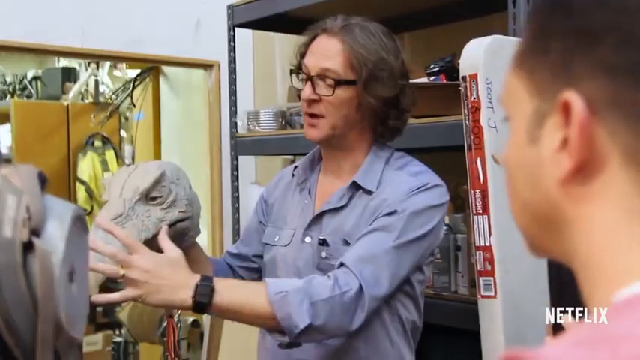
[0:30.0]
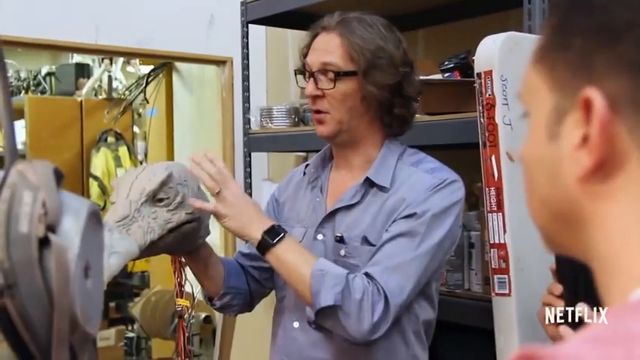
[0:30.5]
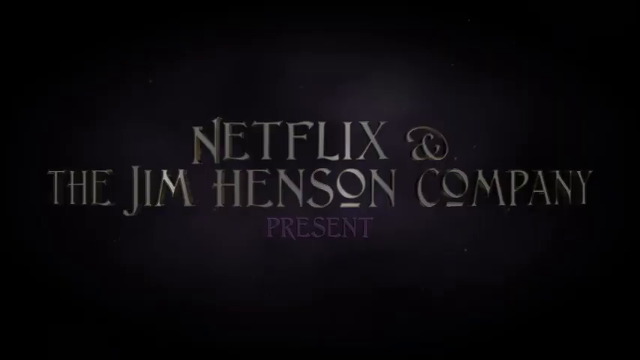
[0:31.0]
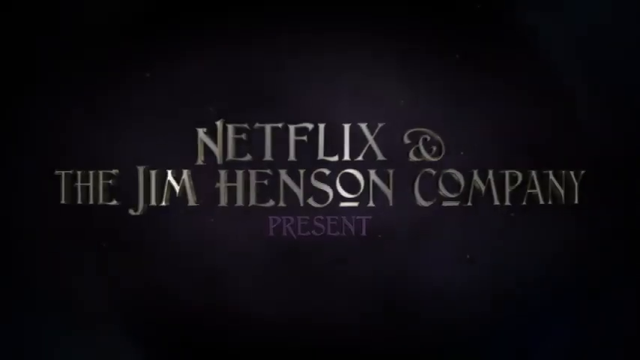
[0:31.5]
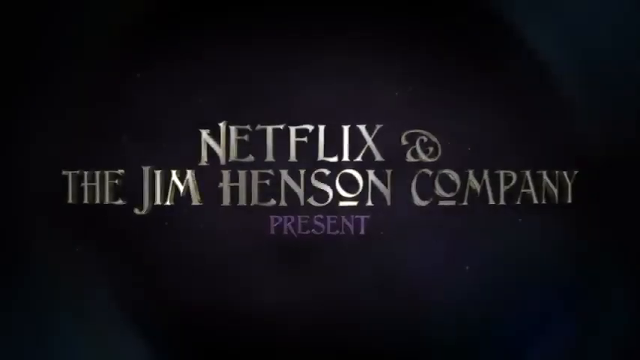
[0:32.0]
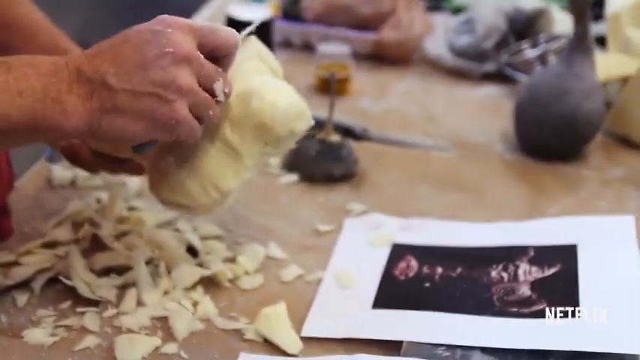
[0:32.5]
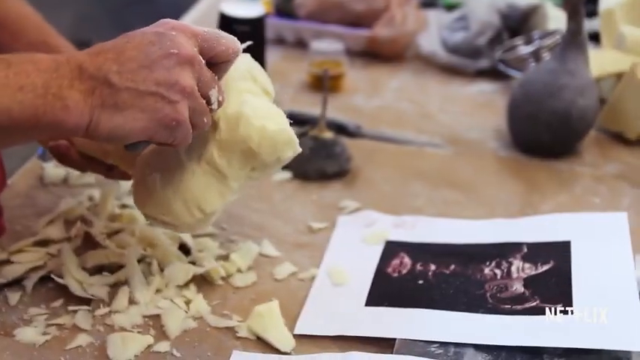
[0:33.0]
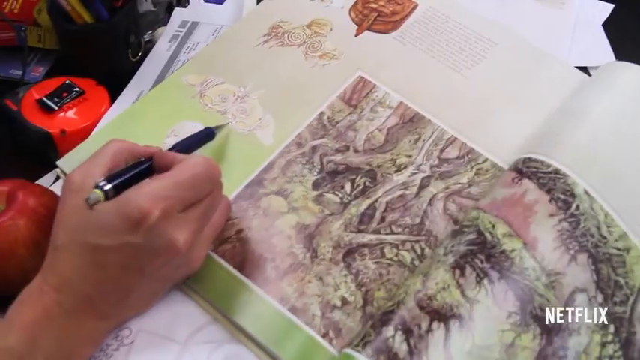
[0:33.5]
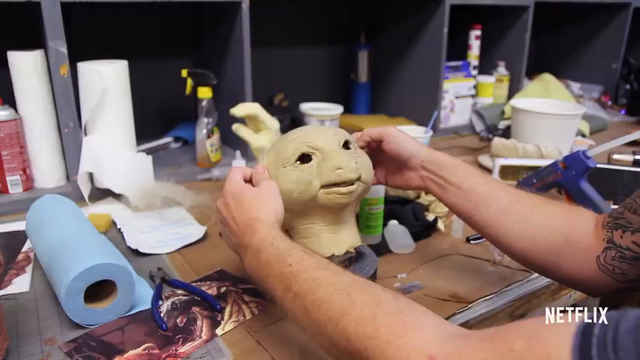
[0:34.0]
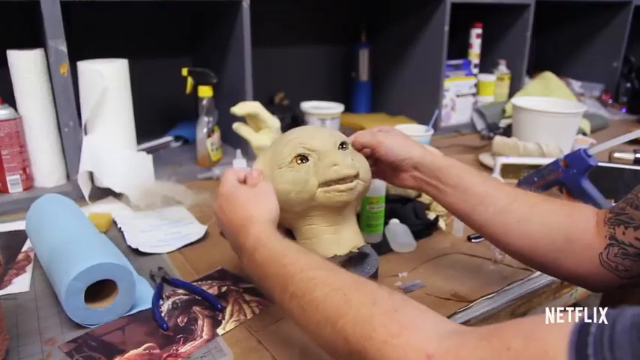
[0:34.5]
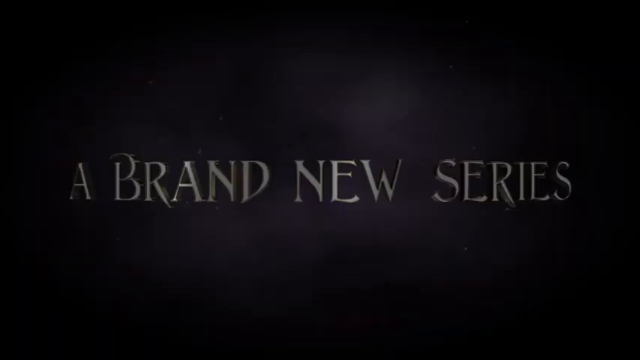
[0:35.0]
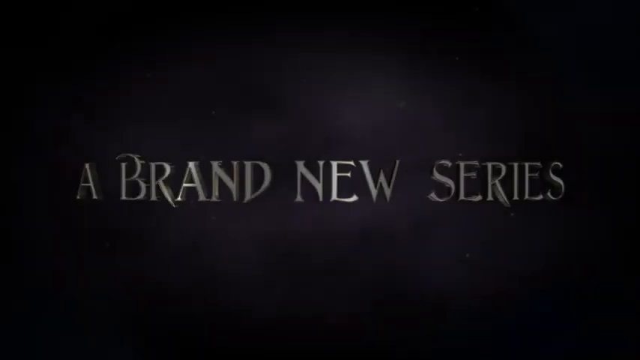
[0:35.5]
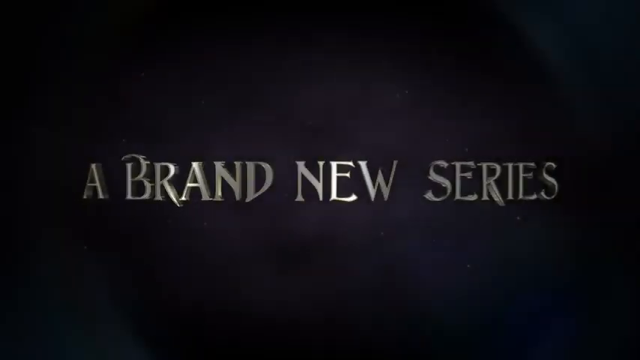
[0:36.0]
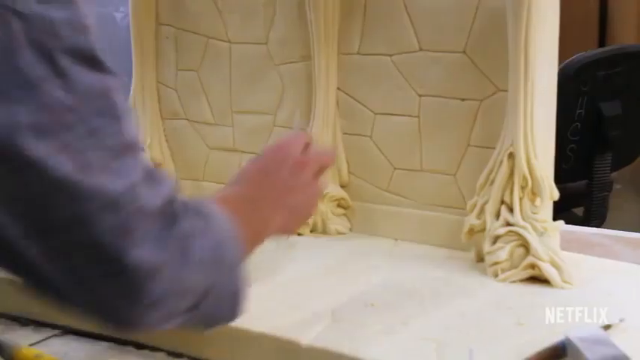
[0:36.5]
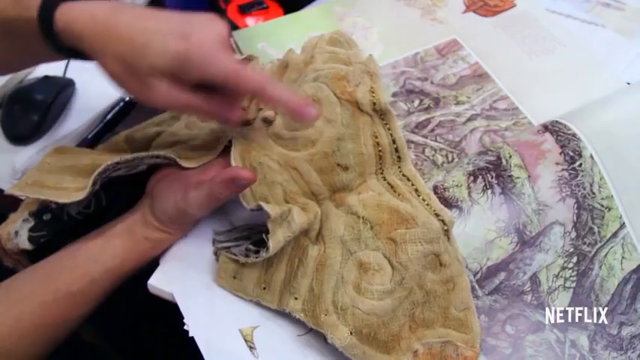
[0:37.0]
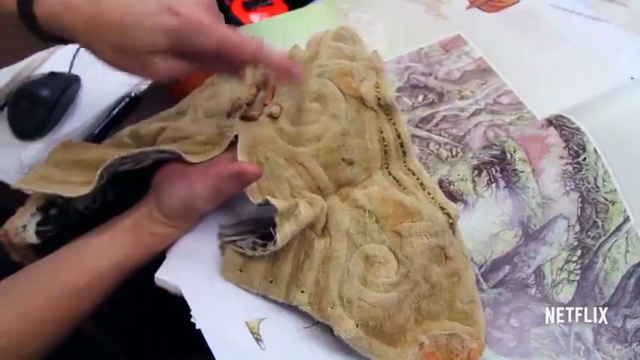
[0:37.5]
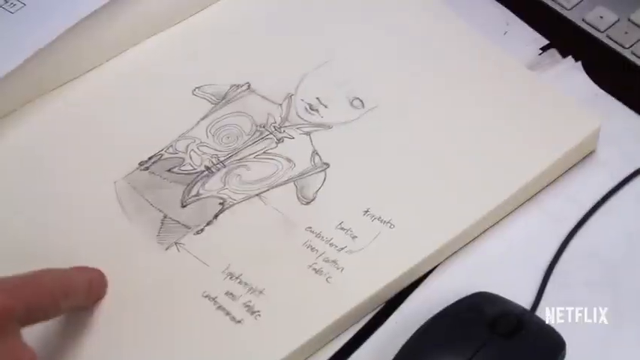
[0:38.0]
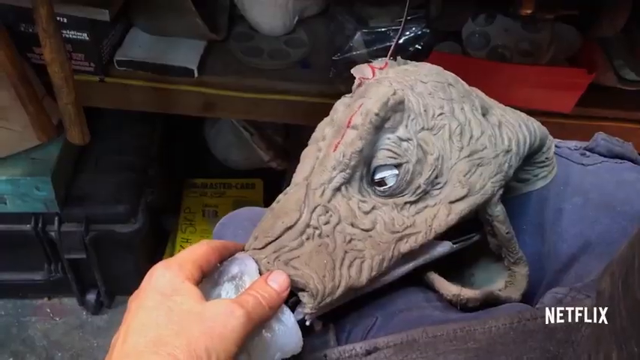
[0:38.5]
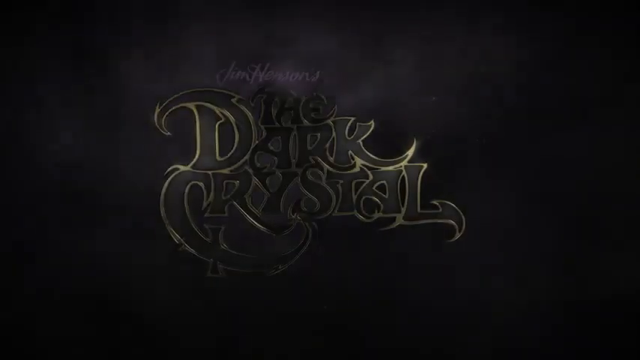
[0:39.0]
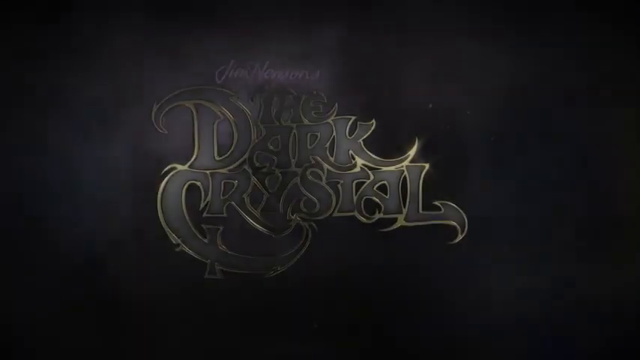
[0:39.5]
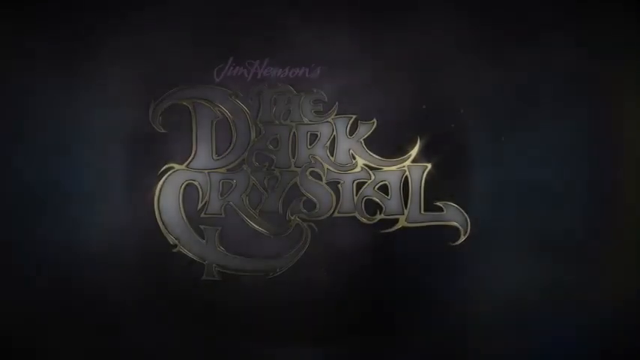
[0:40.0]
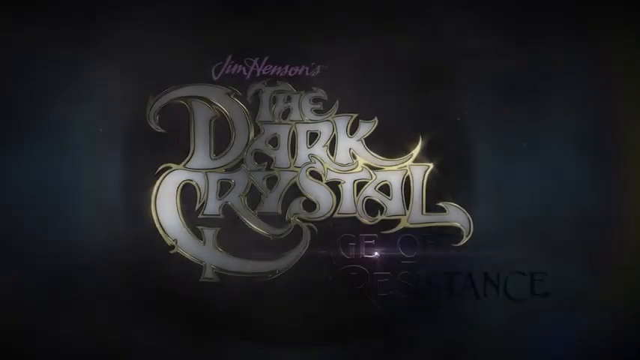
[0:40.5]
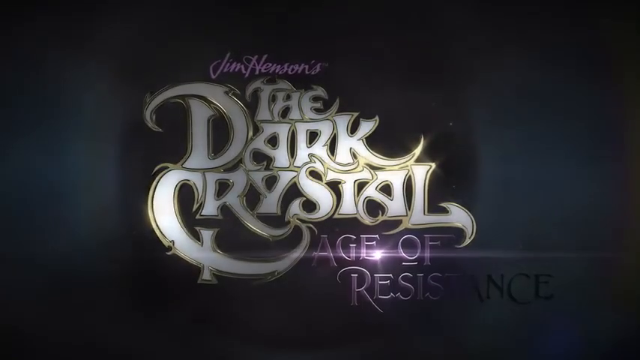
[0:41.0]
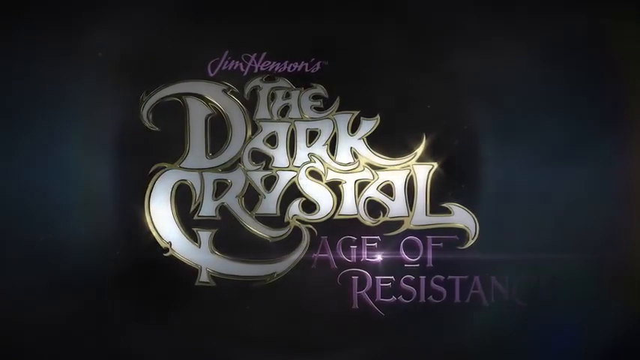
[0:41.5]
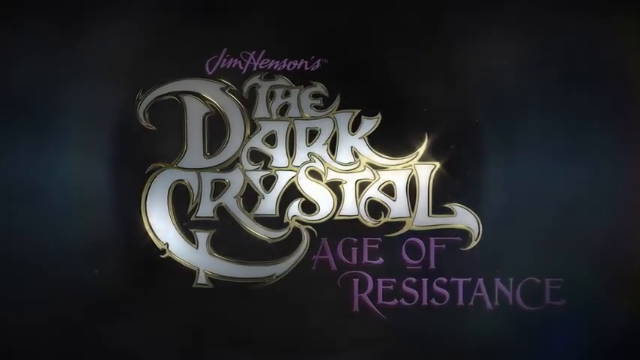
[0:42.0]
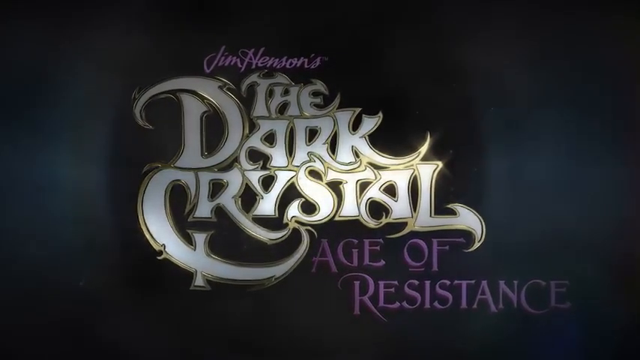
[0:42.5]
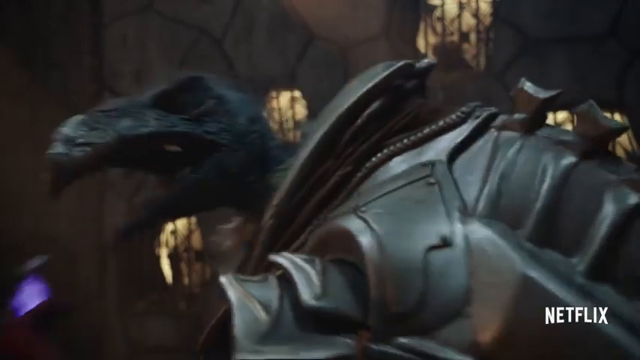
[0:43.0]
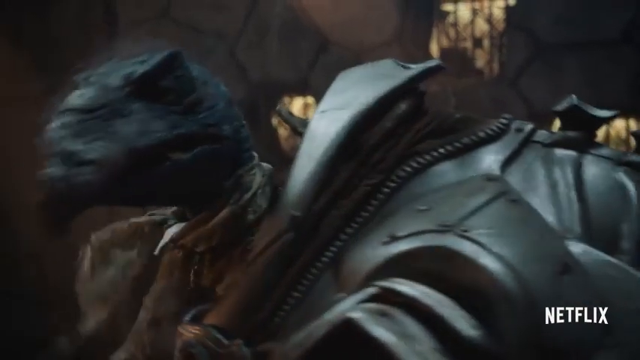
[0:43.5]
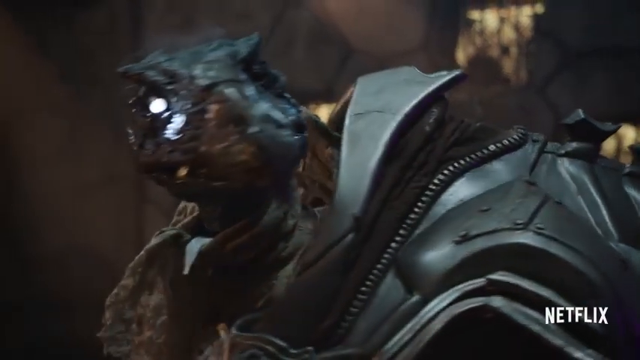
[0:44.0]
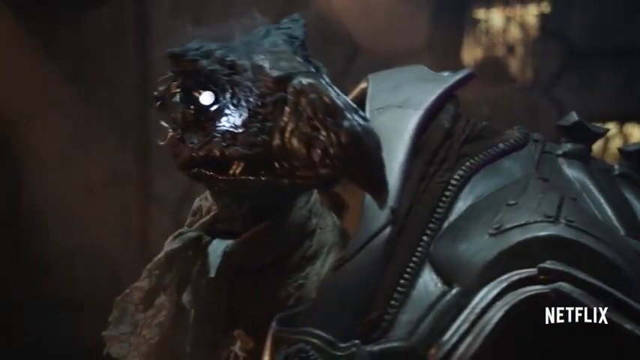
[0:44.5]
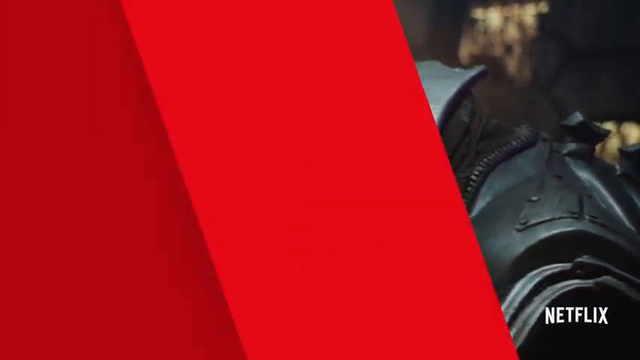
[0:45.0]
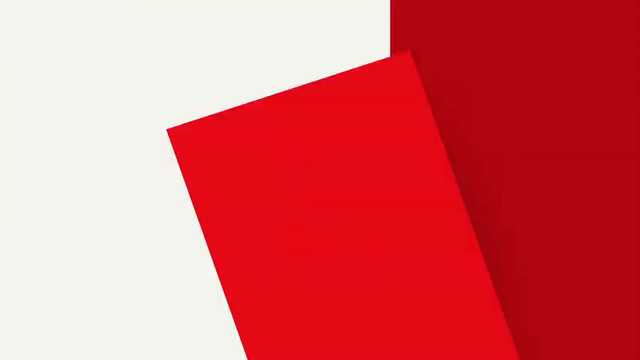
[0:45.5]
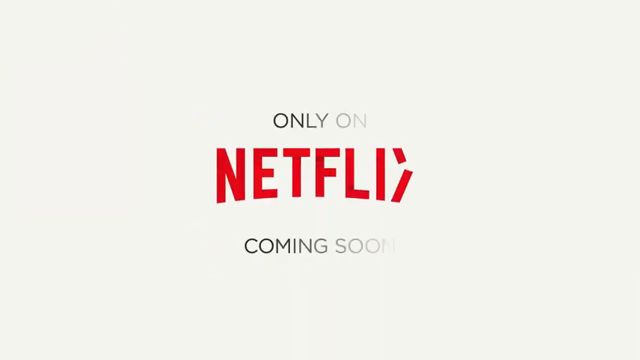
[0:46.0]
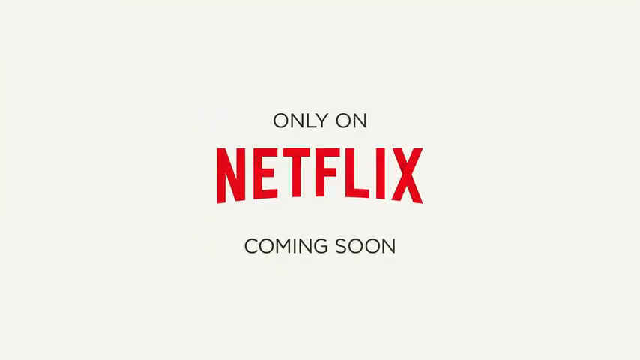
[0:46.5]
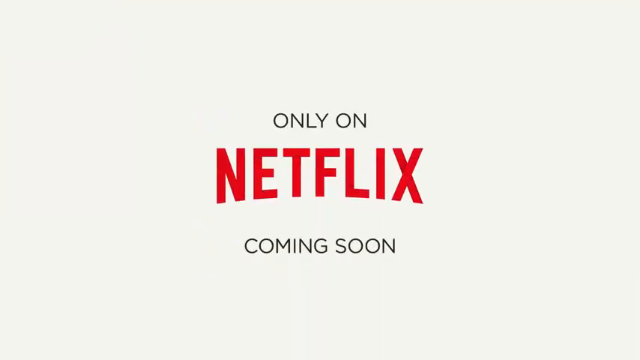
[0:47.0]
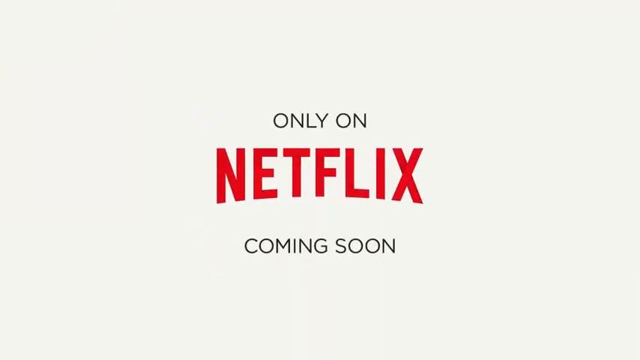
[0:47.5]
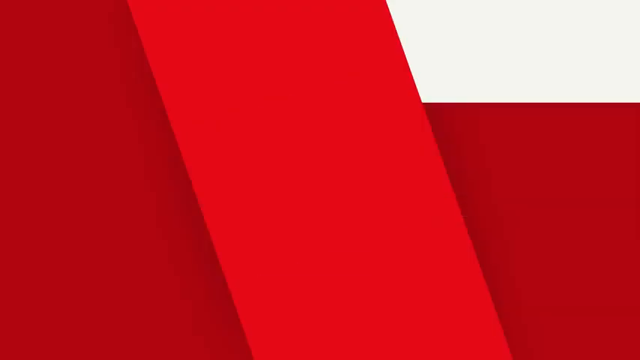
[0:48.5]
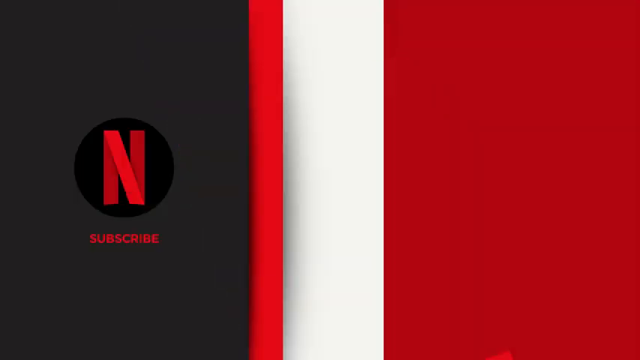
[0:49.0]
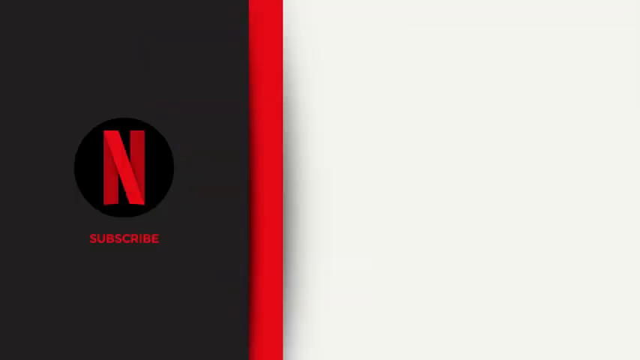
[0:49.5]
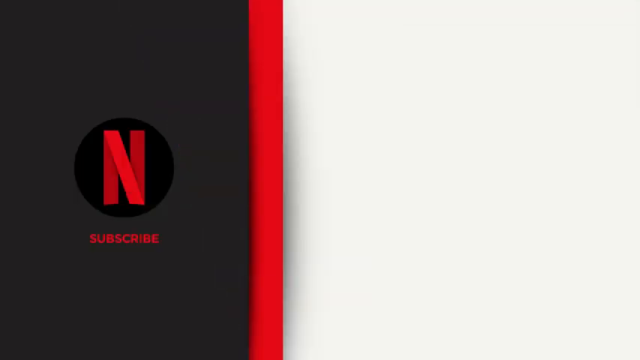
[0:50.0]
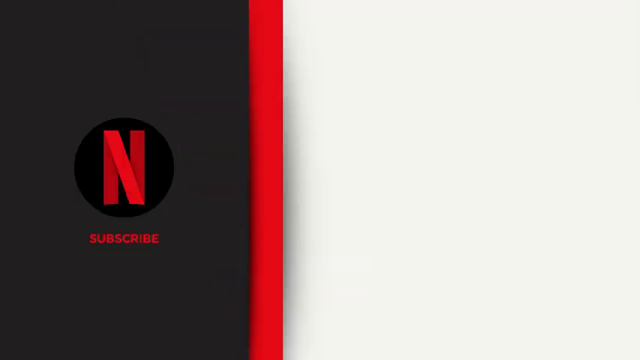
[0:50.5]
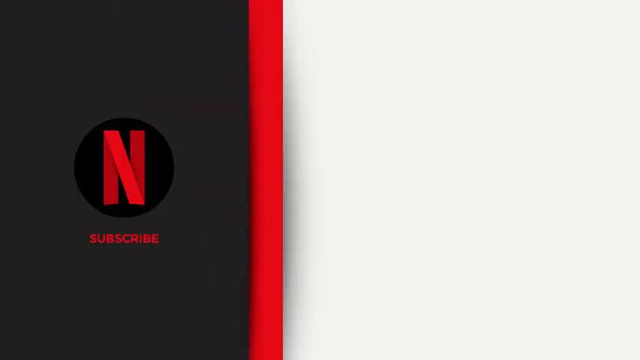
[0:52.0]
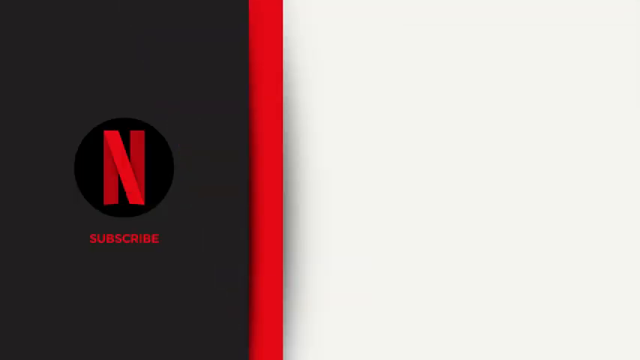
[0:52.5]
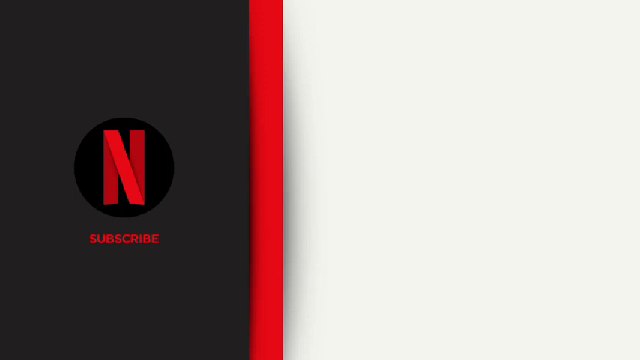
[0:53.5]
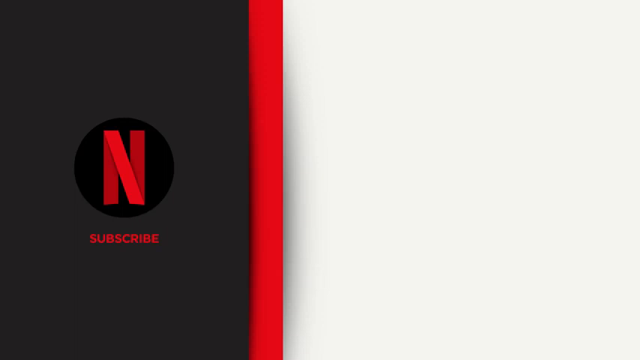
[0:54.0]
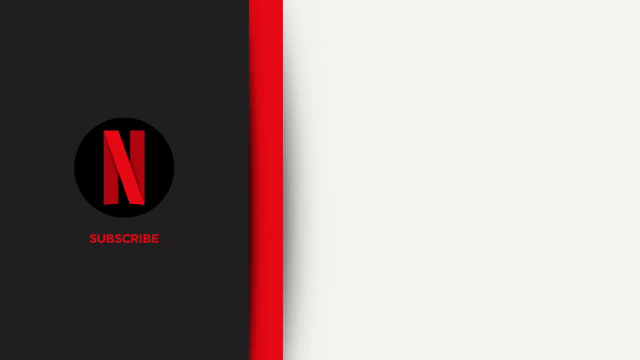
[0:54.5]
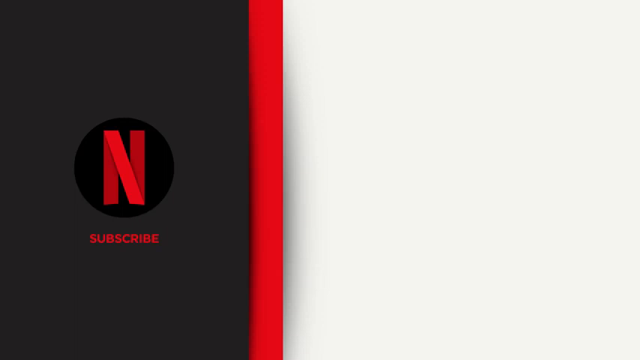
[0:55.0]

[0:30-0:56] A man wearing glasses and a blue shirt has what looks to be a bird and its beak in his hand. Another man is standing on the right of the frame and points to the object, with the small Netflix logo in the bottom right corner. A black screen shows silver gold text reading "Netflix and the Jim Henson company present," with "present" in purple. A man holds an object he appears to be carving, seemingly following a piece of paper on what to carve. A person draws on a book, and a person has some kind of latex mask. A black background with gold text reads "a brand new series." A short compilation follows: somebody carving something, someone pointing to a kind of carved latex design, a piece of paper with a drawing on it, and what looks to be some kind of animatronic latex toy. A black background reads "Jim Henson's the dark crystal age of resistance." A creature that looks like a bird wears some very futuristic gear. Red and white Netflix lines come up on the screen, then a white background reads "only on Netflix coming soon." More red color comes up on the screen, and finally a small black and red circle appears with red text reading "subscribe."